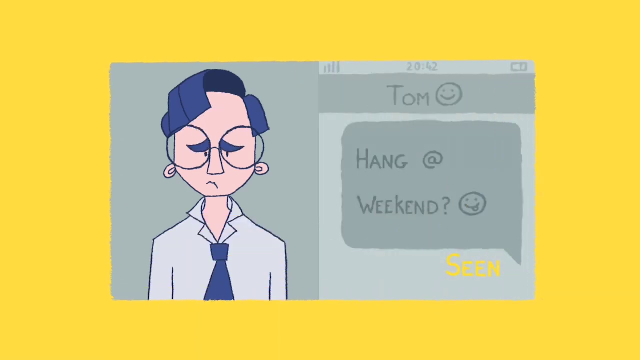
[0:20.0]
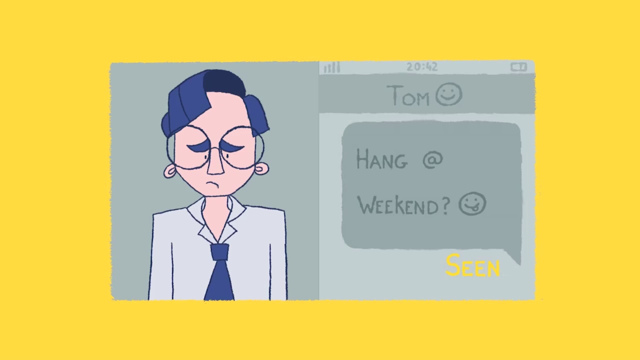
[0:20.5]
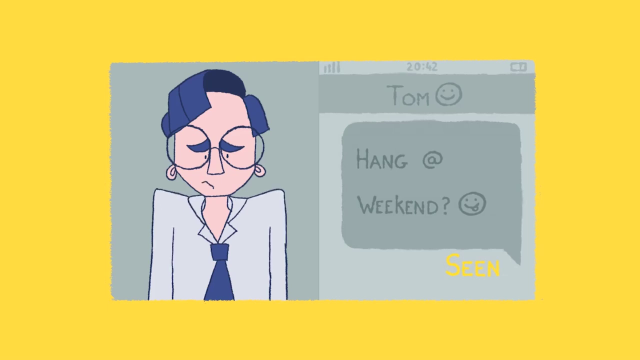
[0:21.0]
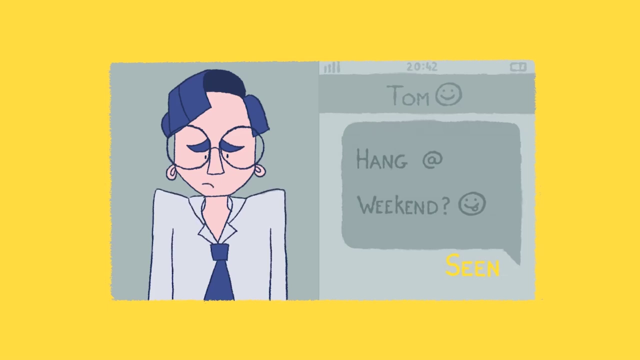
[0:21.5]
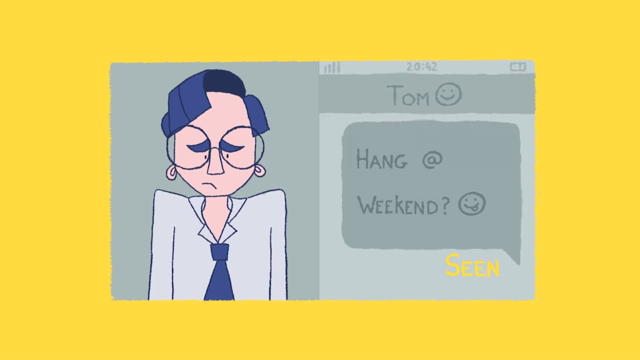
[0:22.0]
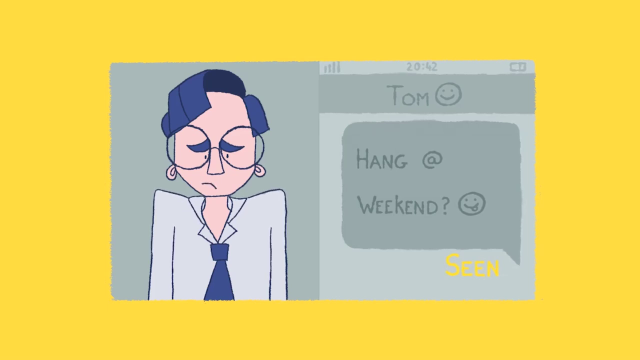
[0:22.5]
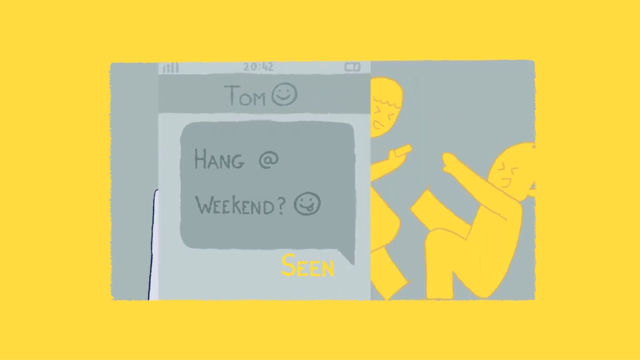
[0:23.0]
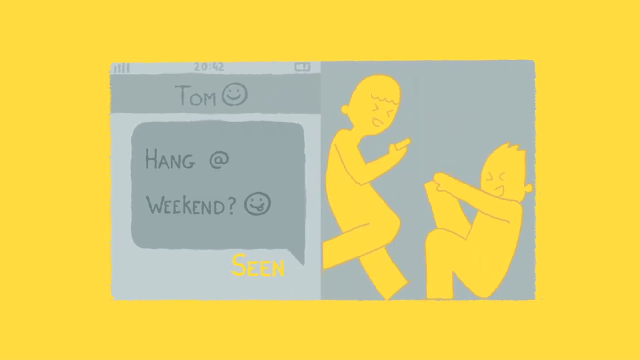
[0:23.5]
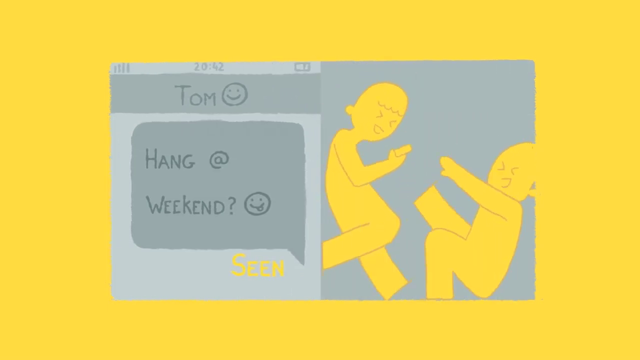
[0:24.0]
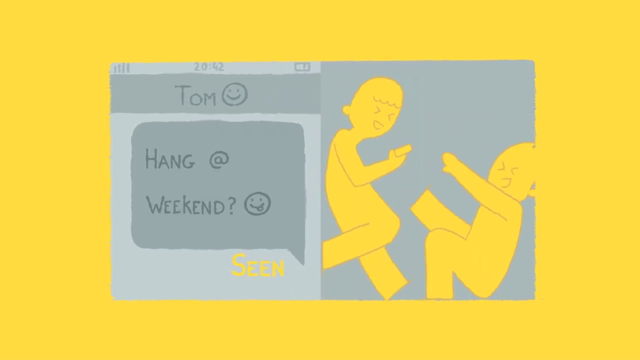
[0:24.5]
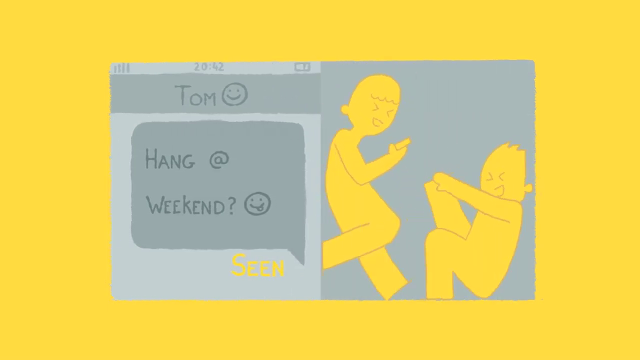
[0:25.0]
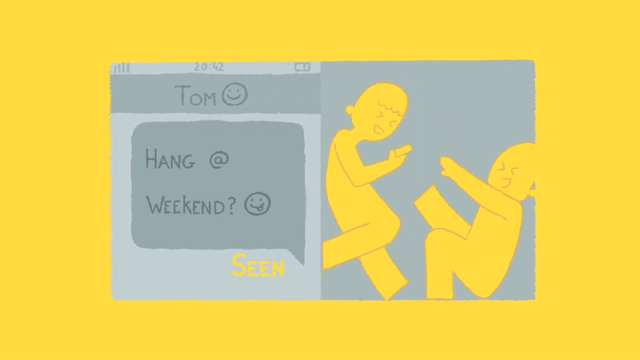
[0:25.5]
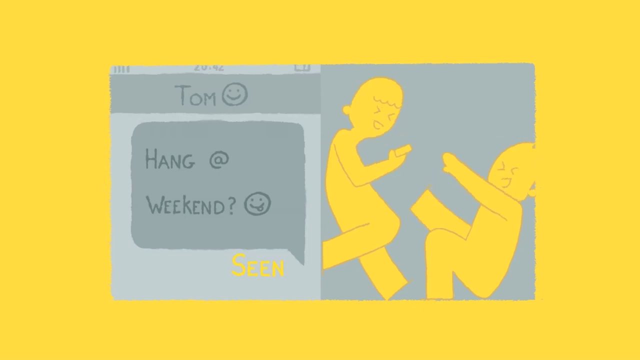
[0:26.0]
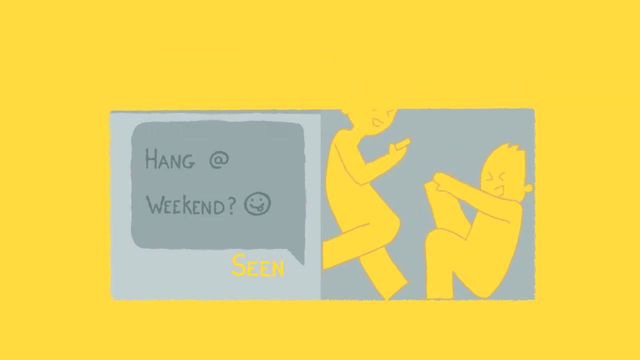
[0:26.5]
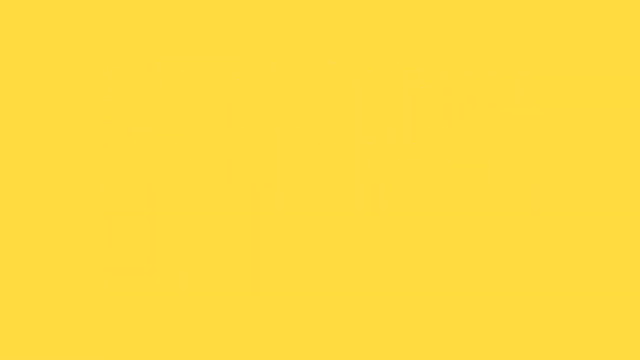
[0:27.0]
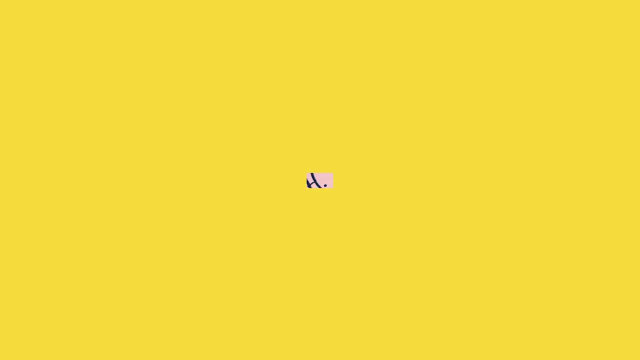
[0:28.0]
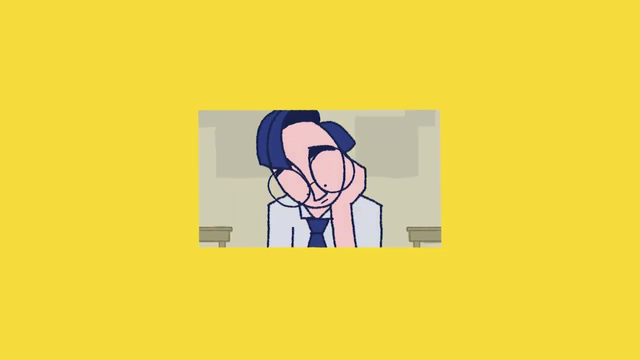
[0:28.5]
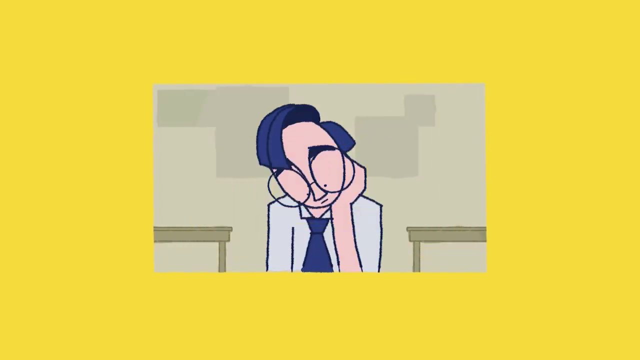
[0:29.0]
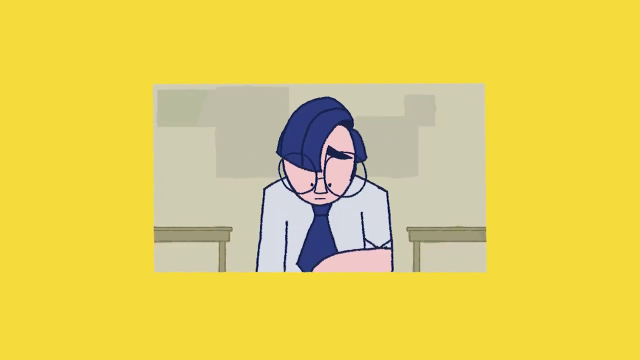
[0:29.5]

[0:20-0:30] The blue-toned cartoon character, with a sad expression, is on the left side of the screen next to the text message they received. It is from Tom and says "hang at the weekend?" with a smiley face, and below it just says "seen", apparently with no response from the main character. The character's shoulders lift up tensely and their mouth quivers. The text message swipes across from right to left, covering the character, to show his friends, who are all in yellow like the yellow hands were, joking, laughing and rolling around. That scene then swipes down to reveal the main character sitting alone again, looking sad, apparently at his place of work, since he is wearing a shirt and tie.